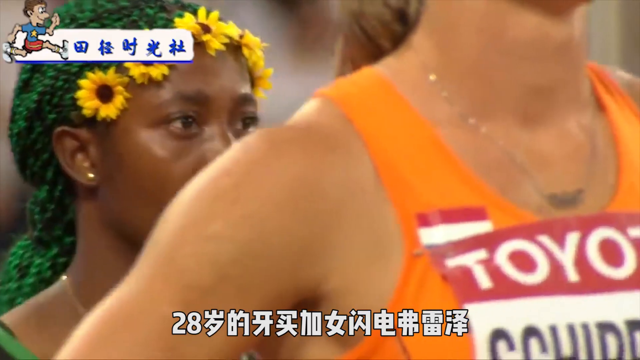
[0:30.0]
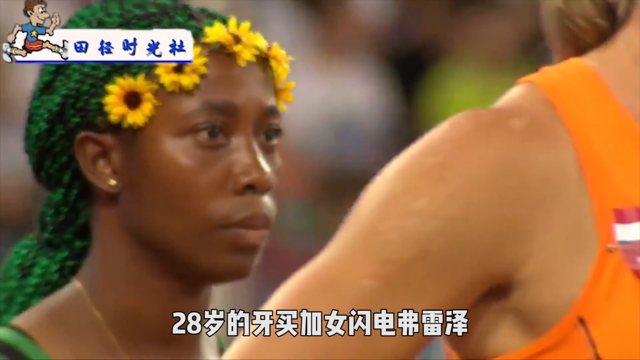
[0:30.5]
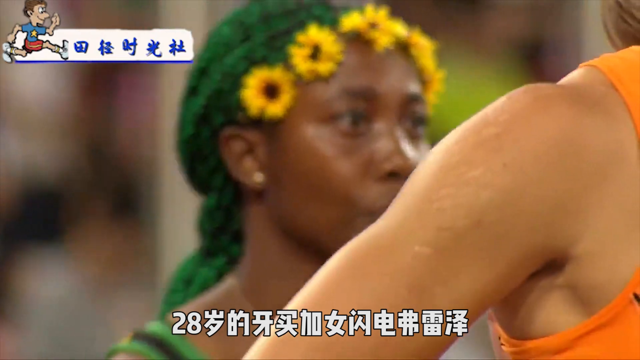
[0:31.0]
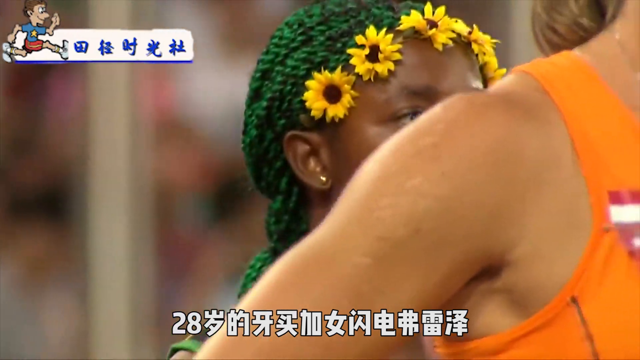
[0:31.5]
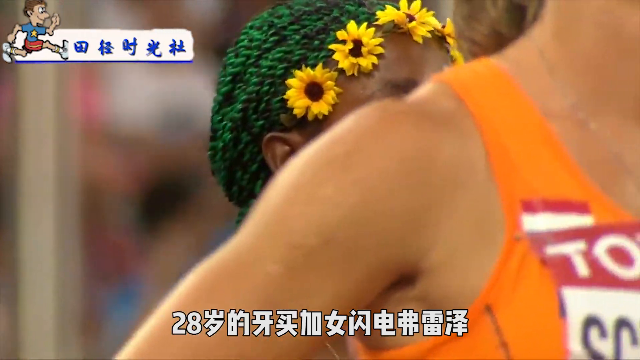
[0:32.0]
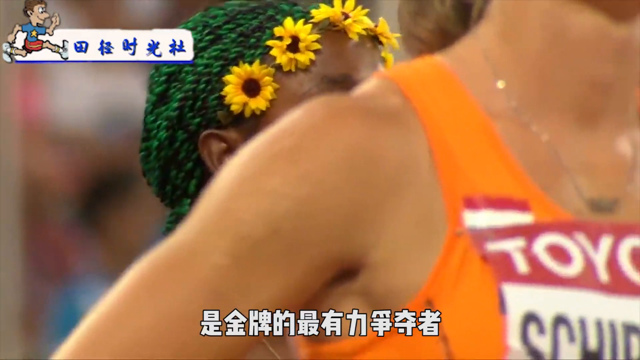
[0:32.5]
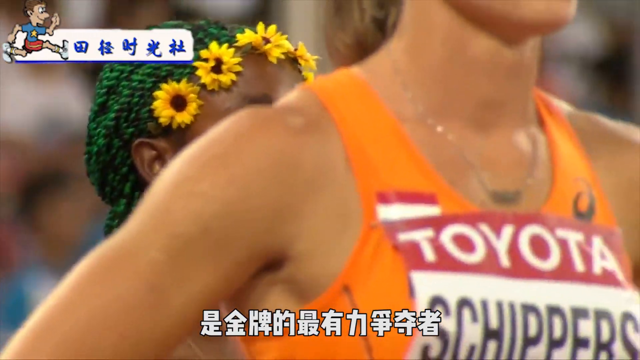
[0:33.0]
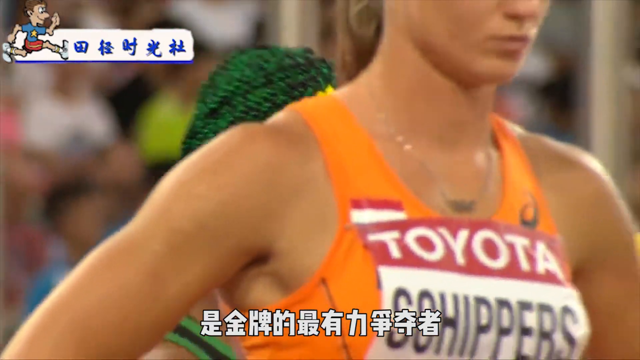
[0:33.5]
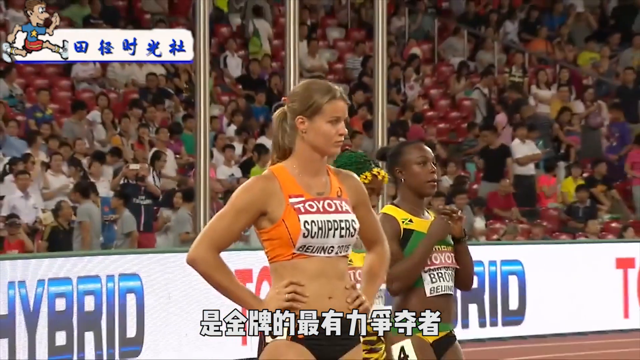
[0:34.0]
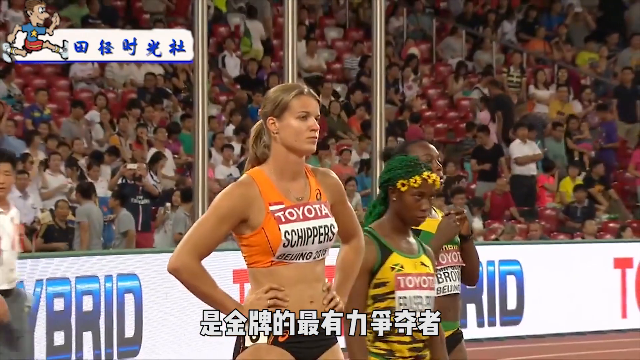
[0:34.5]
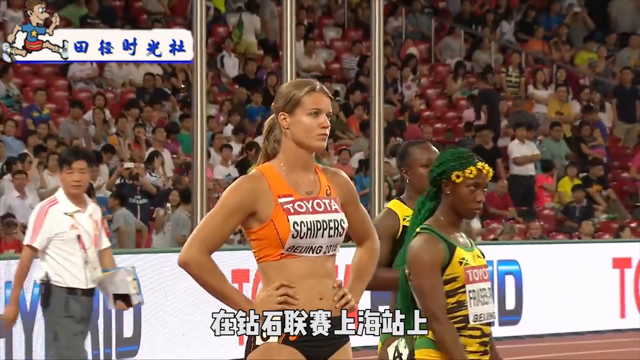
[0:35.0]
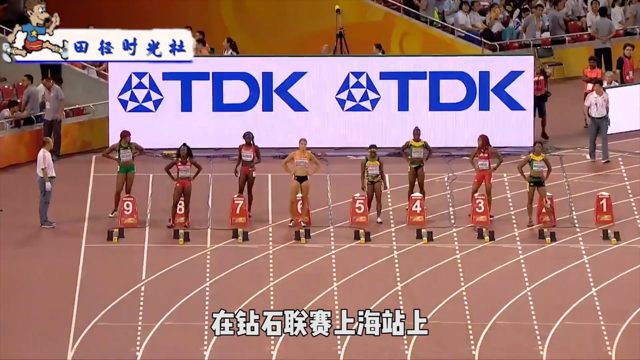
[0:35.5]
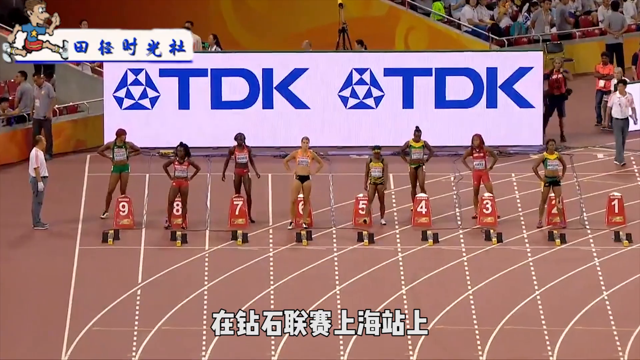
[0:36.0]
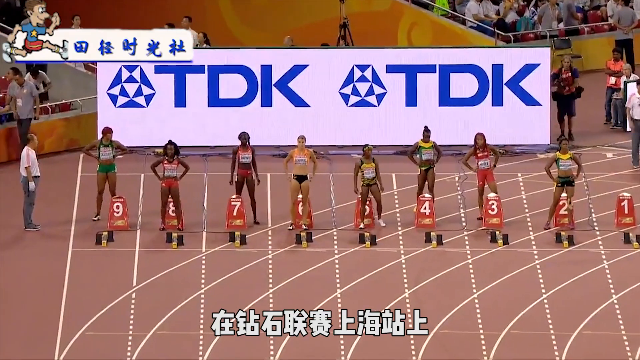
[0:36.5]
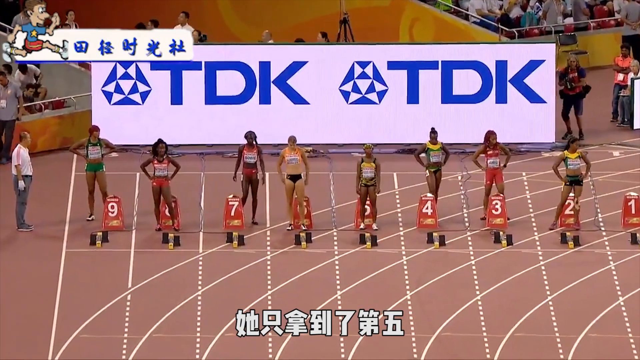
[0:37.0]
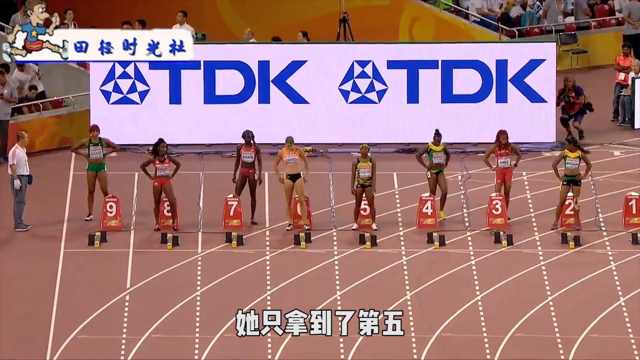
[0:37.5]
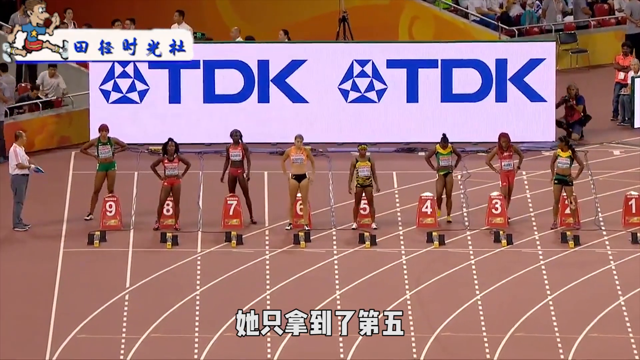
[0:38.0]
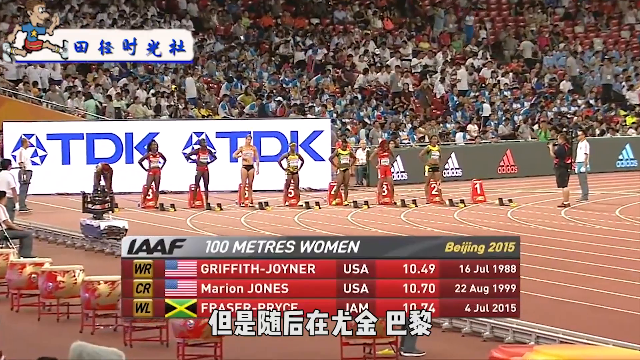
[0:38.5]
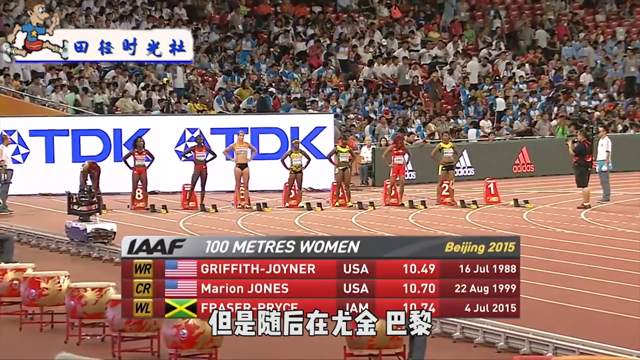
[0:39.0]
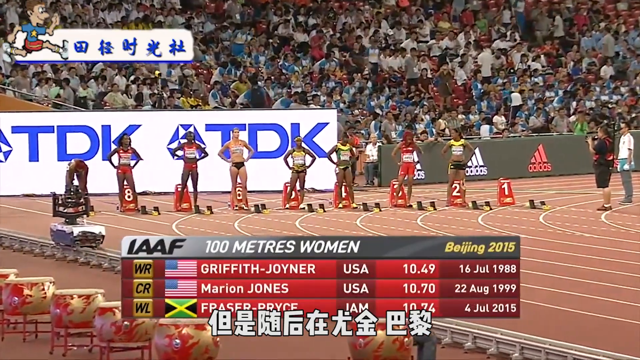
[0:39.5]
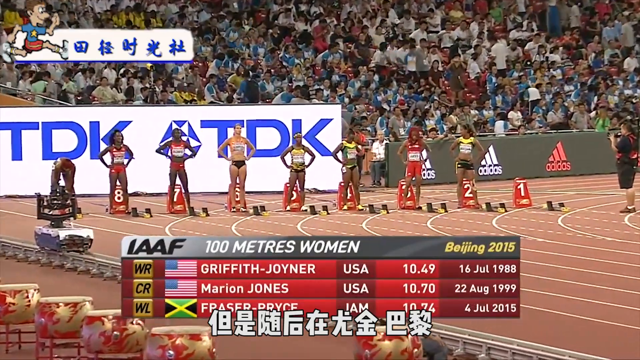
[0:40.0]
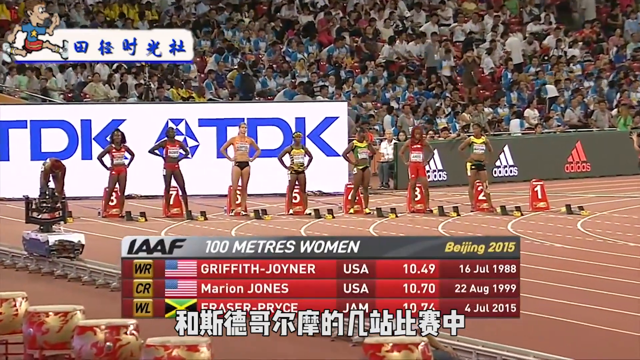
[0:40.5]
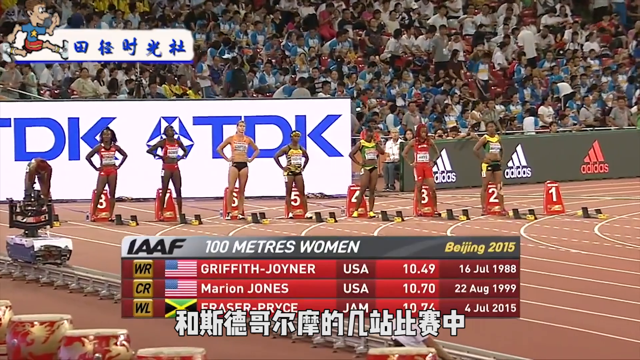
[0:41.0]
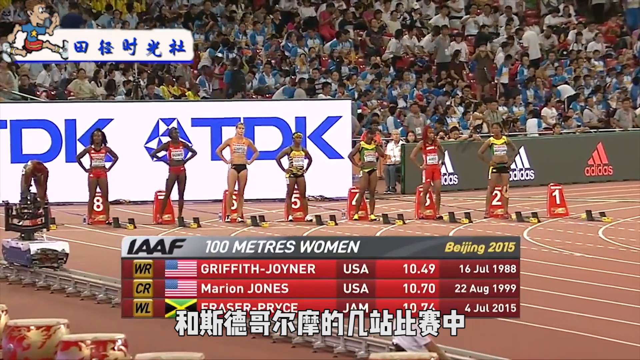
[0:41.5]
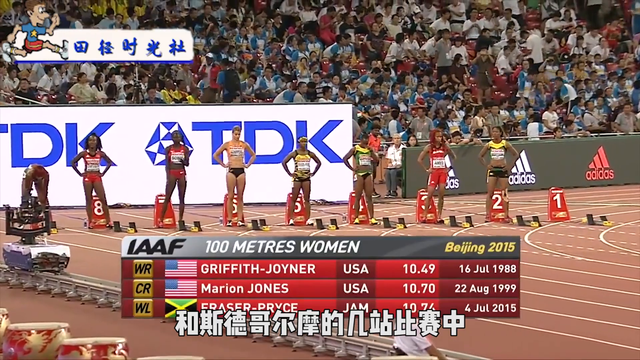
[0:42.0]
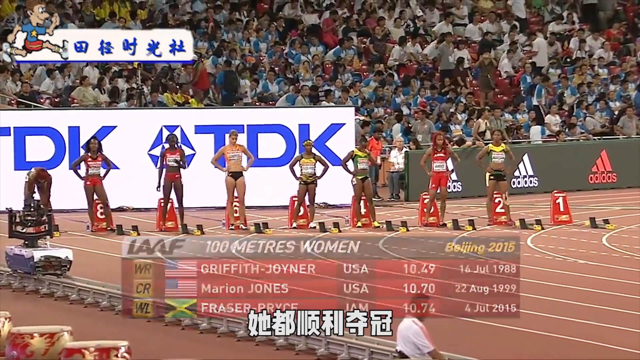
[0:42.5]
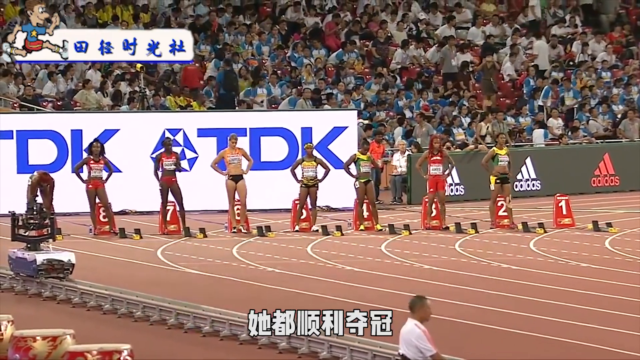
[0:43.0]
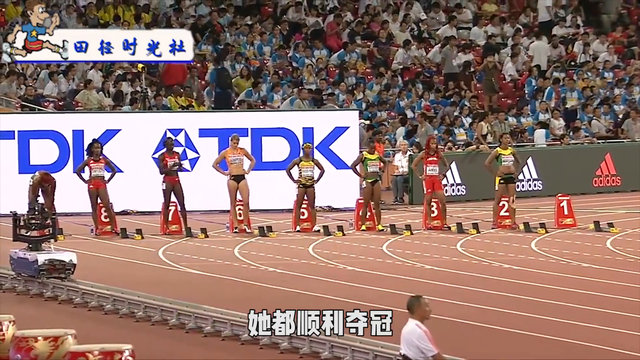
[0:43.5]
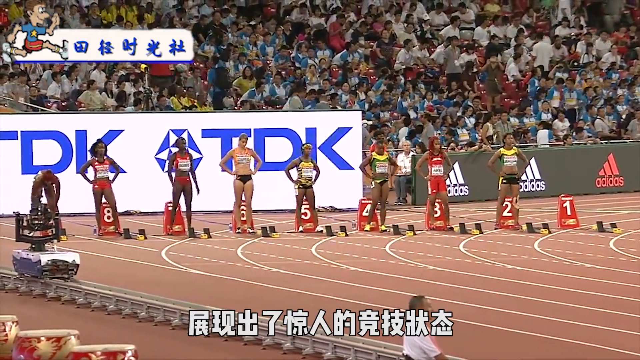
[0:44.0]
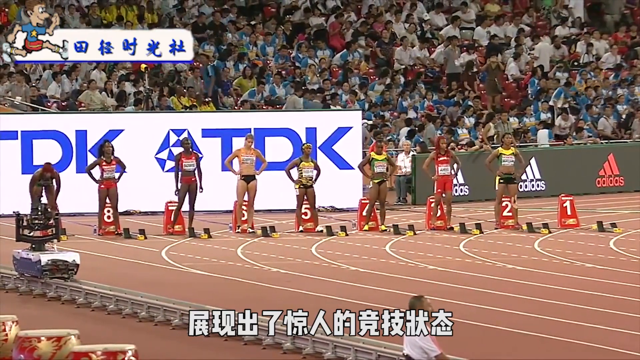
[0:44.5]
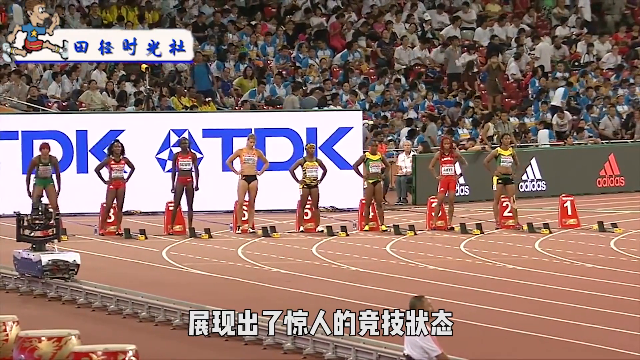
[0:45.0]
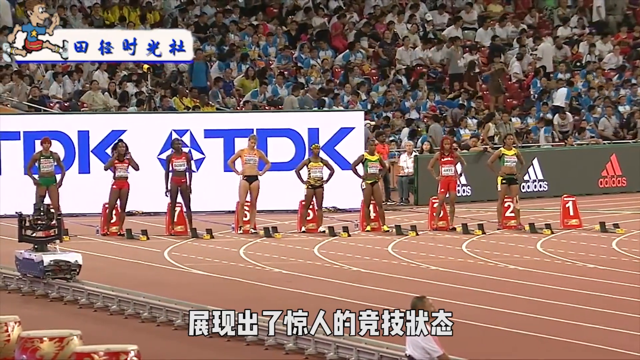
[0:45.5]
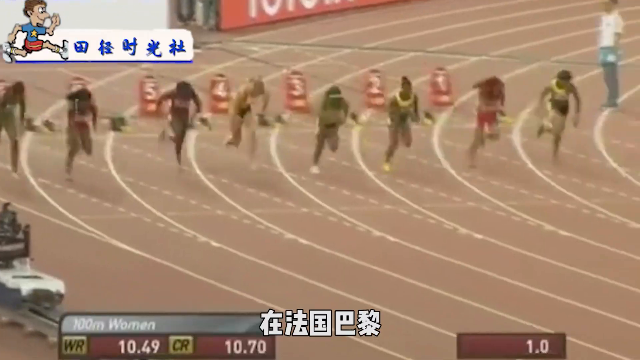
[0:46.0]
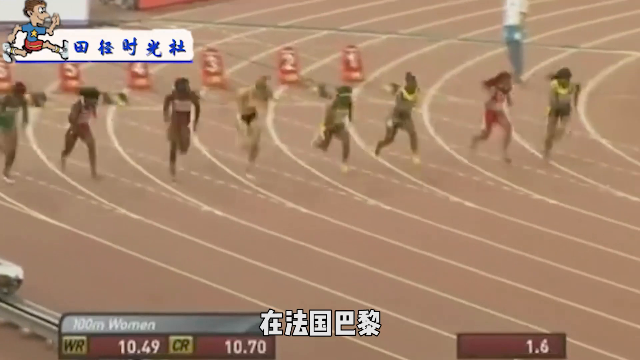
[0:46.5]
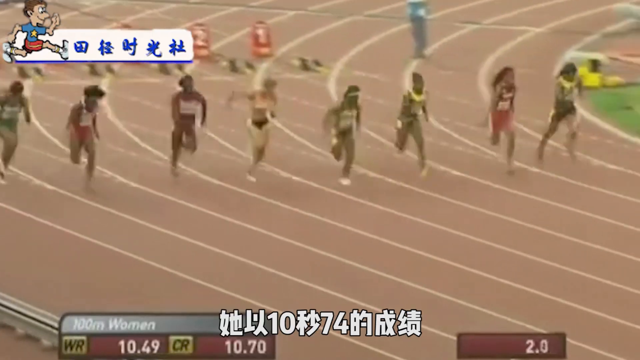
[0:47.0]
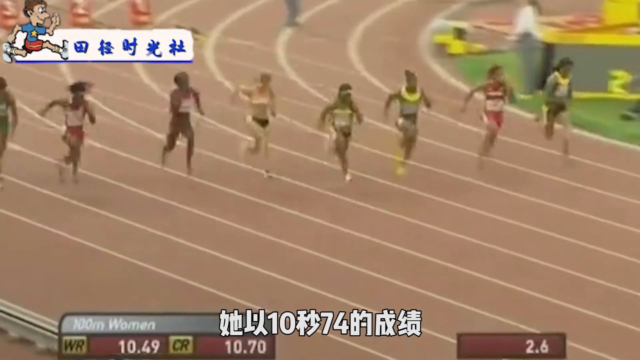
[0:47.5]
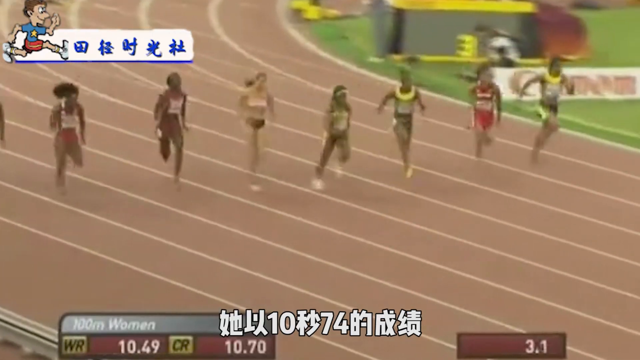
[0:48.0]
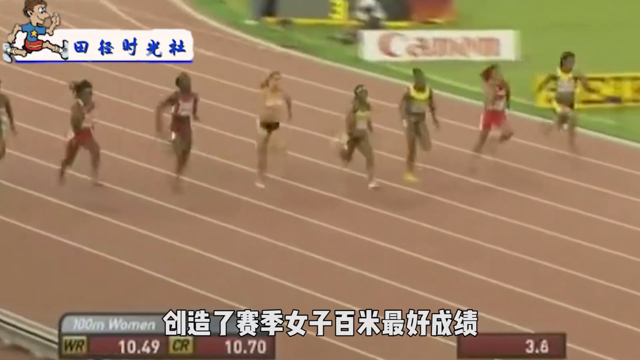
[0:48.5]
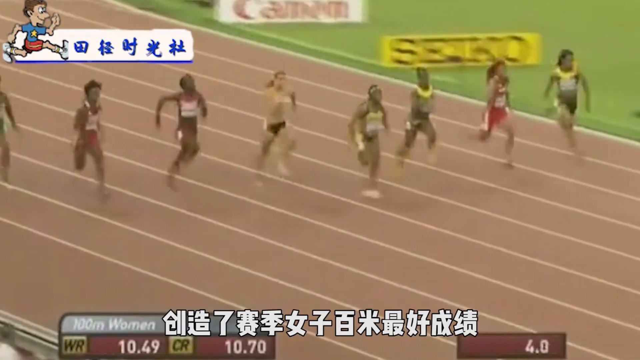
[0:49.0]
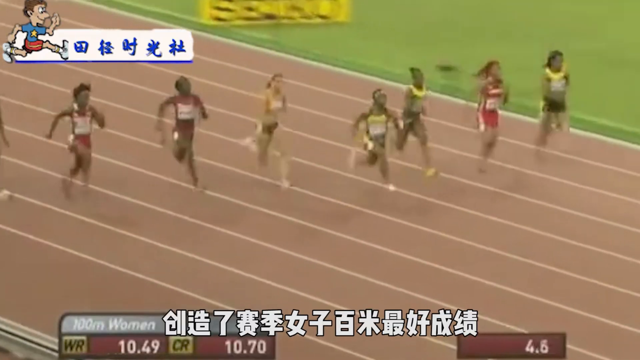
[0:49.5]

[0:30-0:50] "hundred meter sprint for women" shows up on the screen, followed by a lineup of some of the individual sprinters; two of the places are American sprinters. The contestants move up and enter the starting area, still standing and not yet down in their kneel. The shot then suddenly changes to them running, and it is unclear whether this is the same group of women. Where the American women are is hard to distinguish.